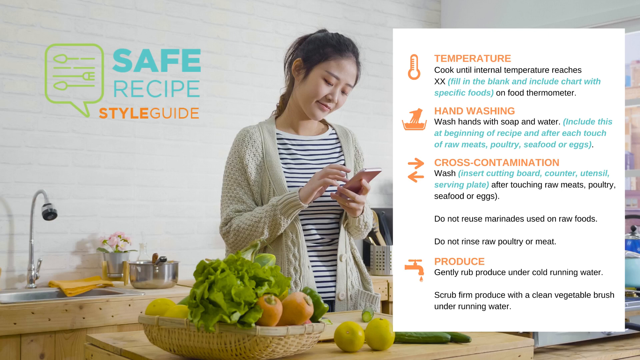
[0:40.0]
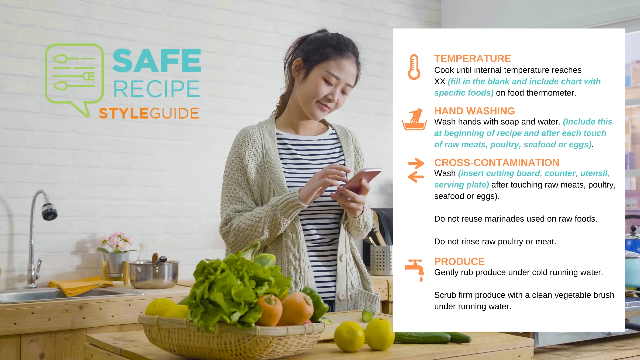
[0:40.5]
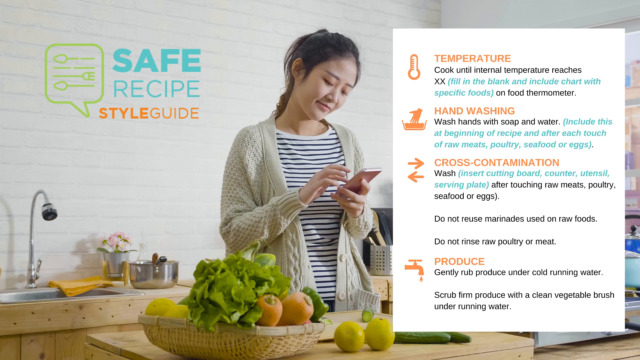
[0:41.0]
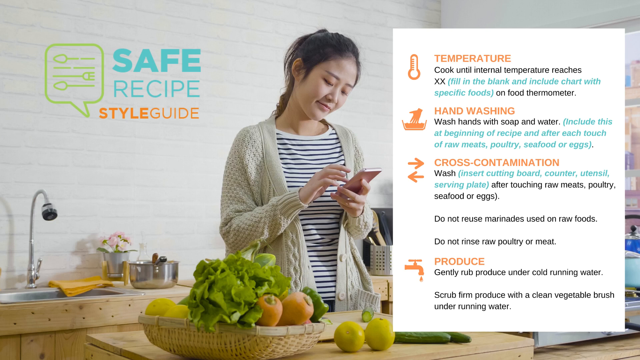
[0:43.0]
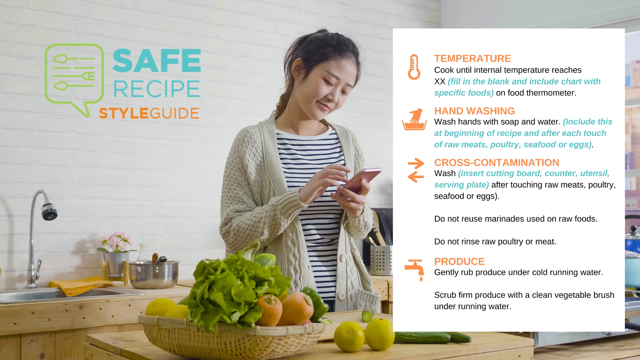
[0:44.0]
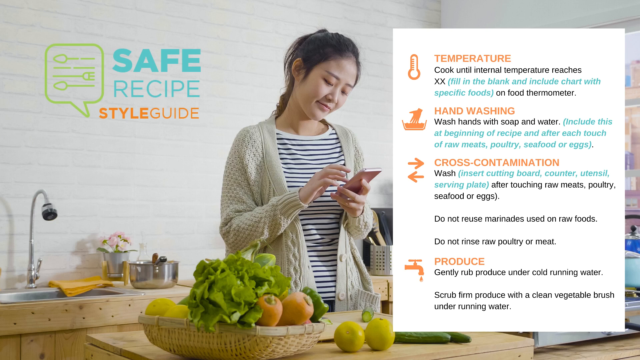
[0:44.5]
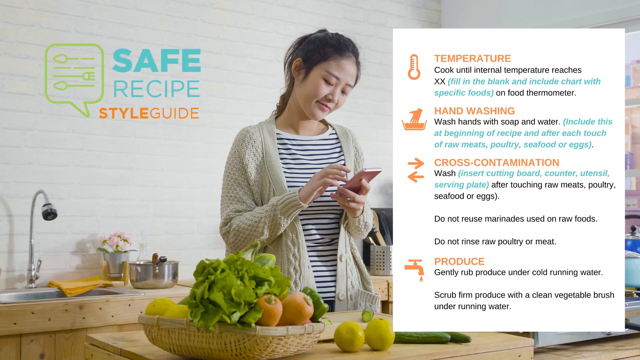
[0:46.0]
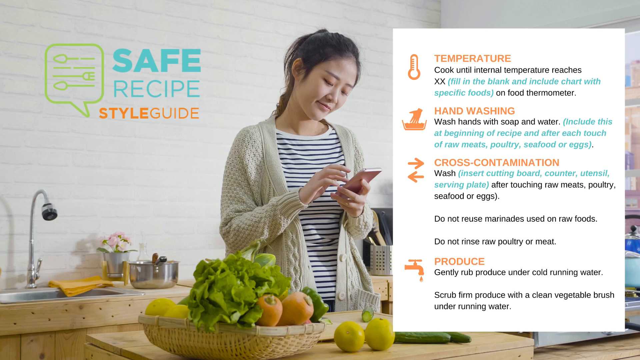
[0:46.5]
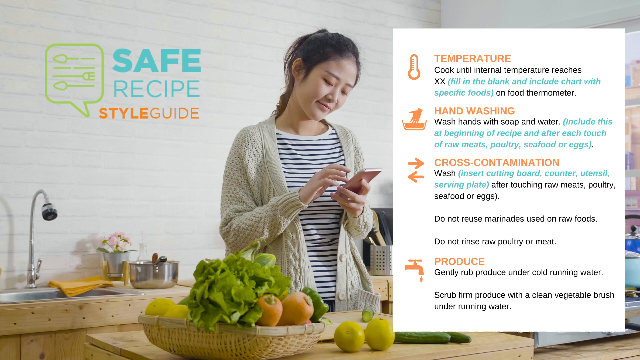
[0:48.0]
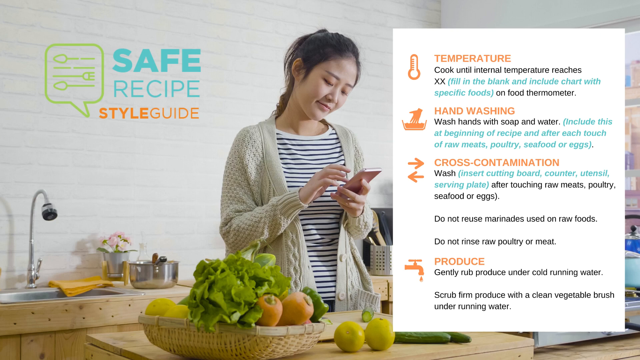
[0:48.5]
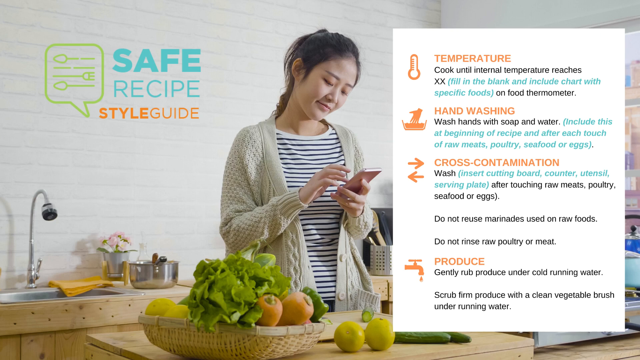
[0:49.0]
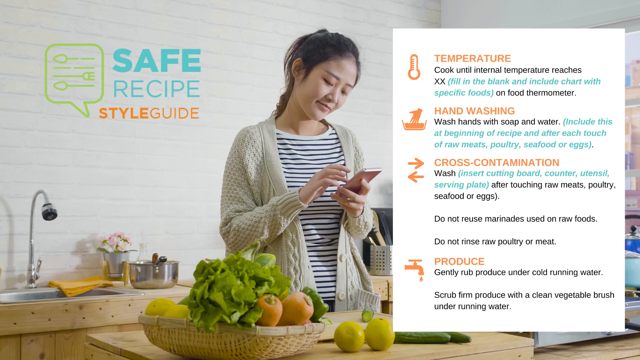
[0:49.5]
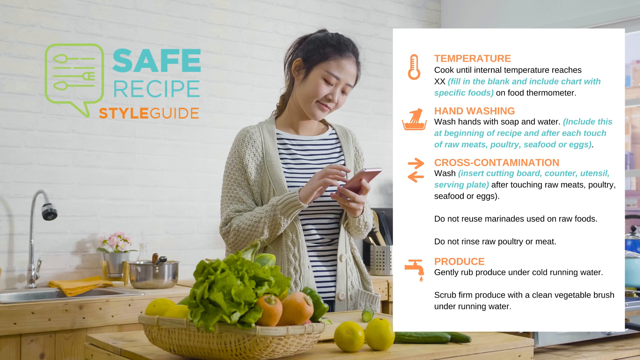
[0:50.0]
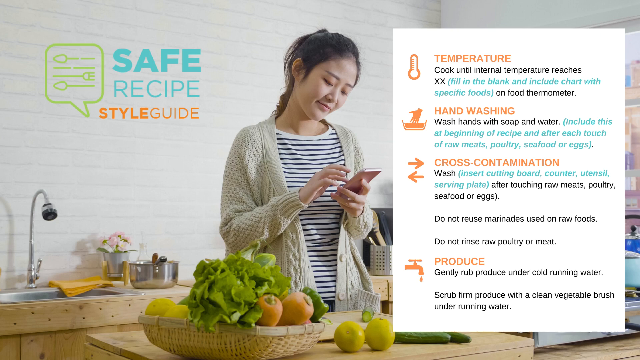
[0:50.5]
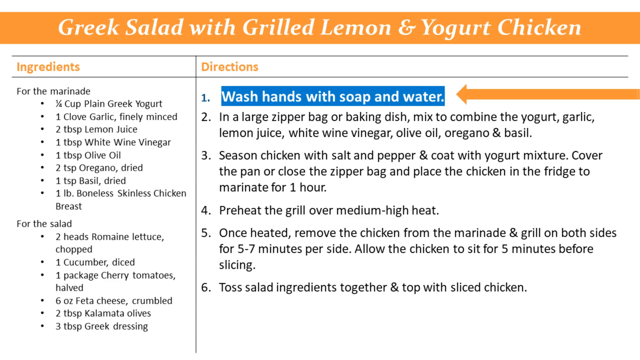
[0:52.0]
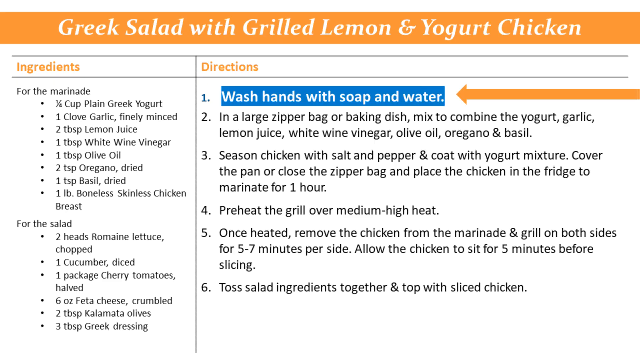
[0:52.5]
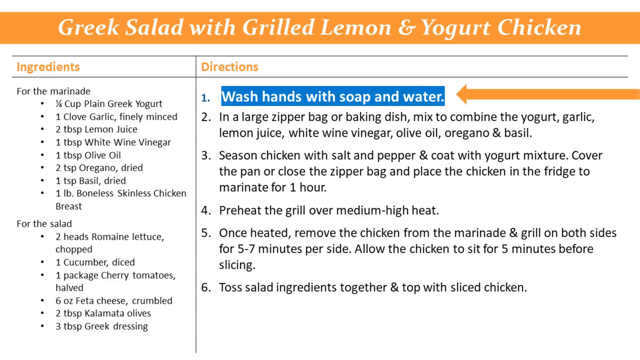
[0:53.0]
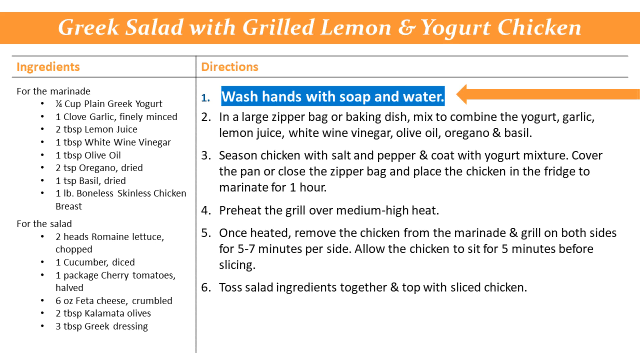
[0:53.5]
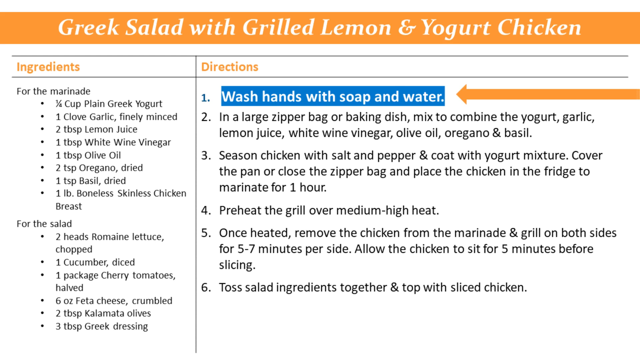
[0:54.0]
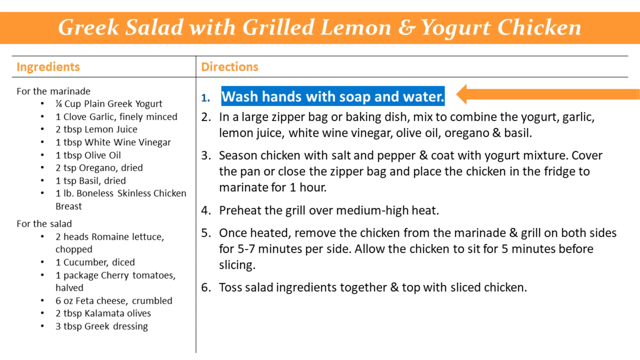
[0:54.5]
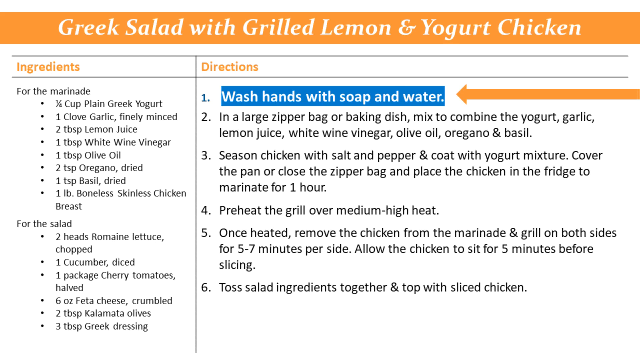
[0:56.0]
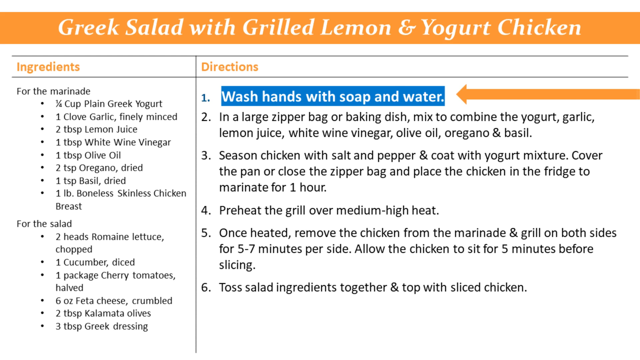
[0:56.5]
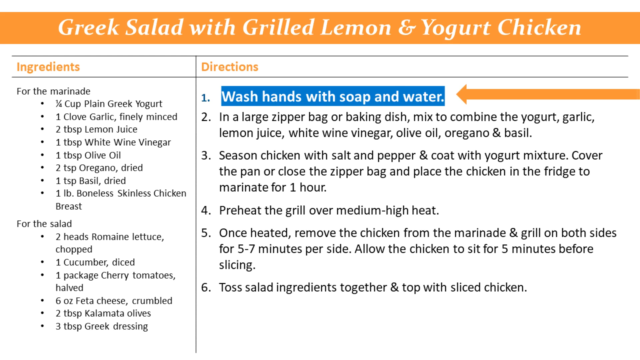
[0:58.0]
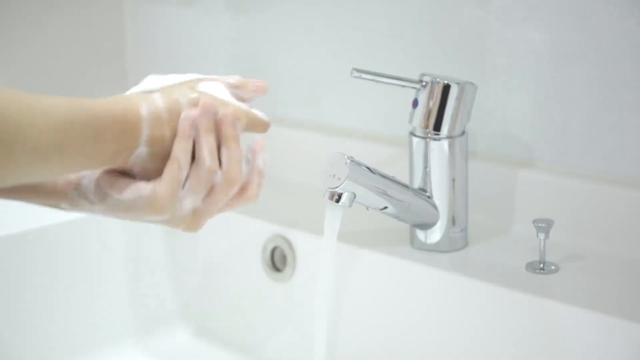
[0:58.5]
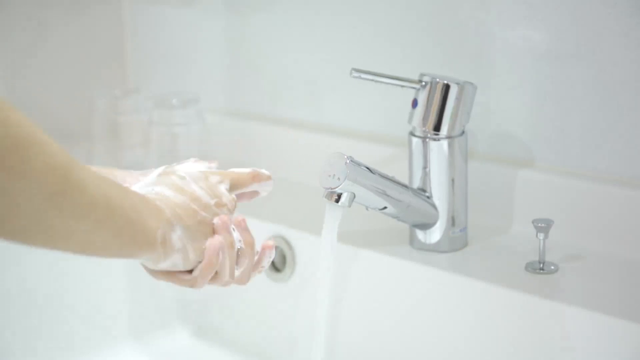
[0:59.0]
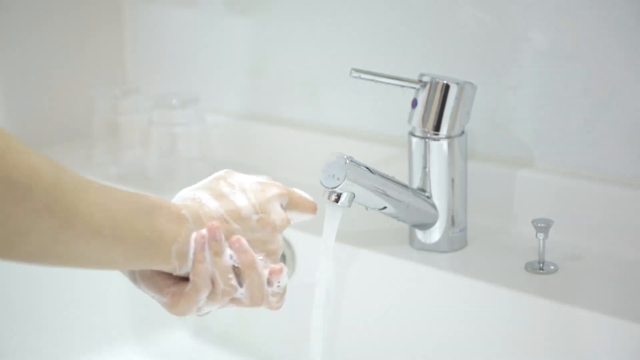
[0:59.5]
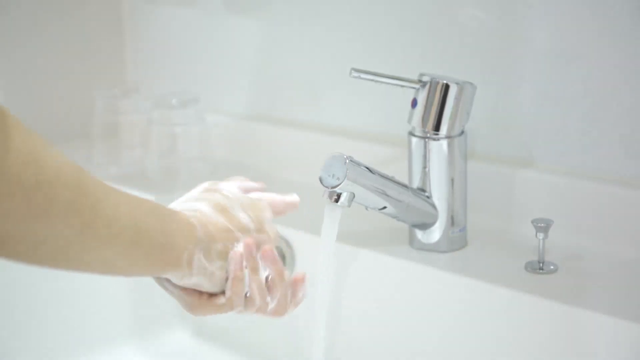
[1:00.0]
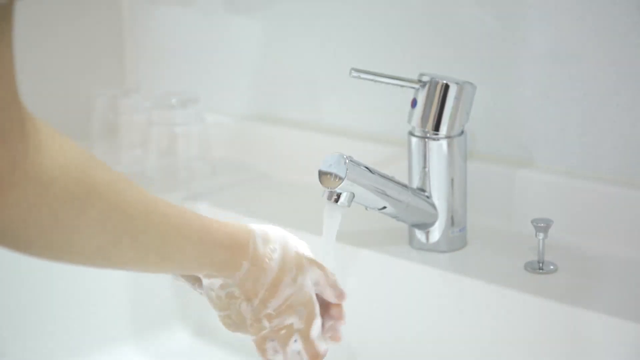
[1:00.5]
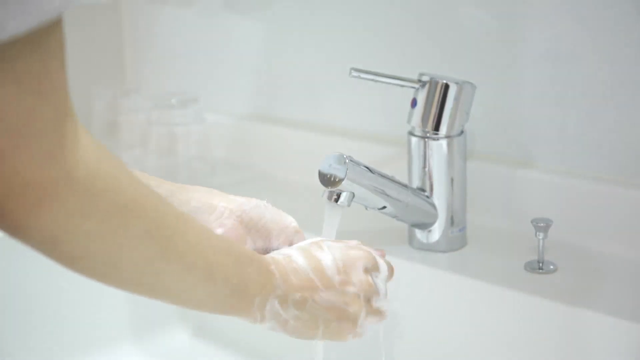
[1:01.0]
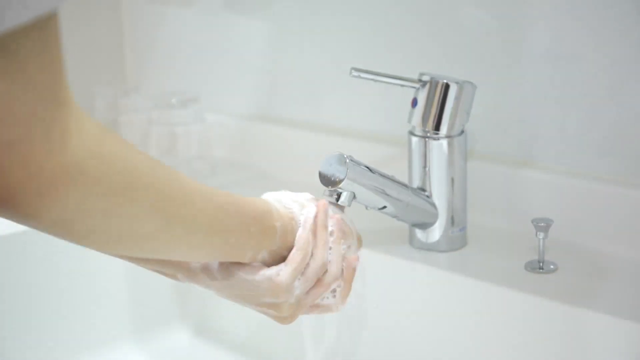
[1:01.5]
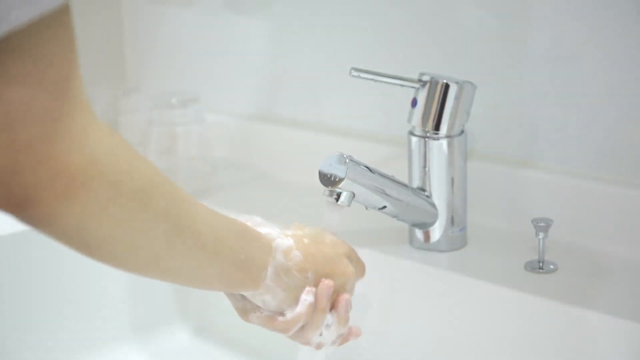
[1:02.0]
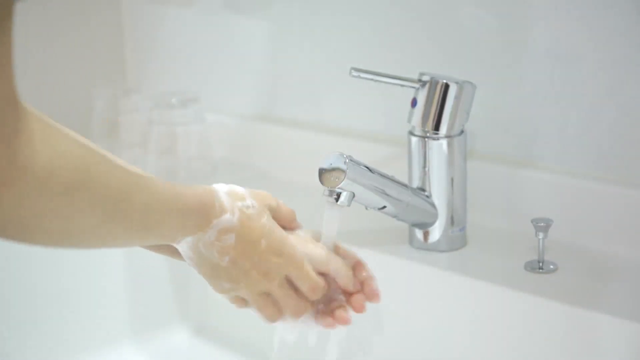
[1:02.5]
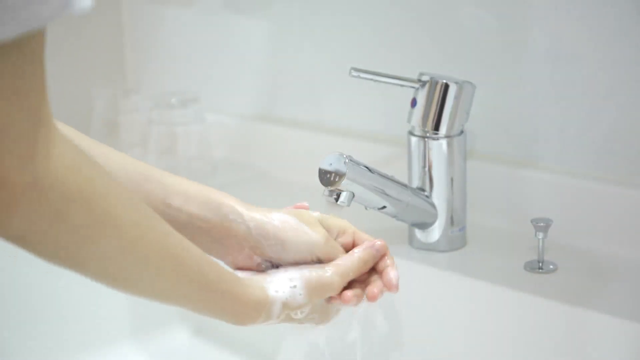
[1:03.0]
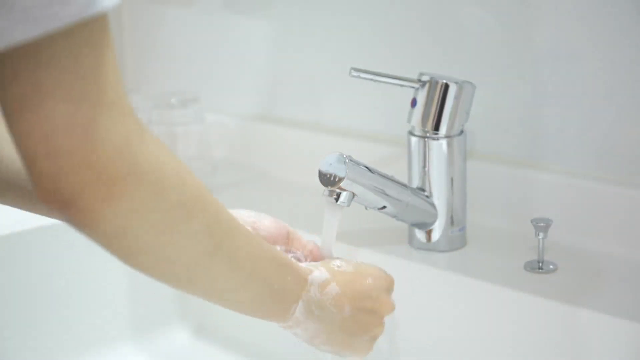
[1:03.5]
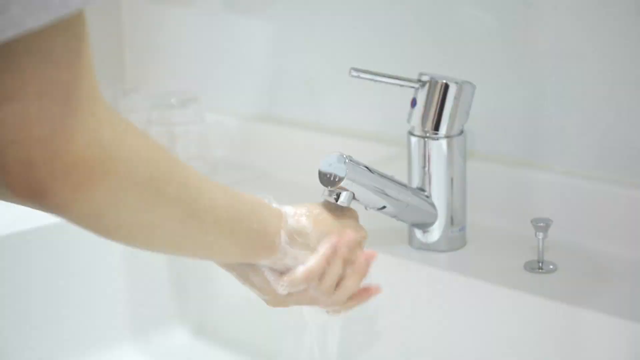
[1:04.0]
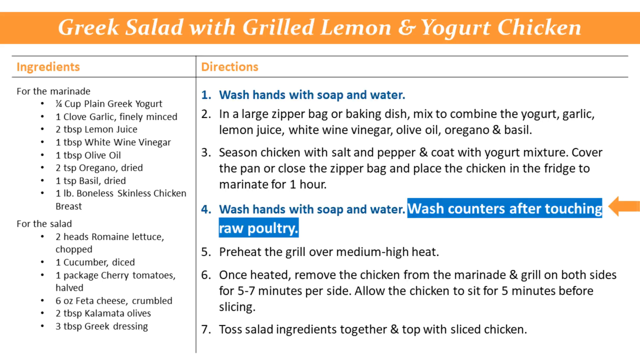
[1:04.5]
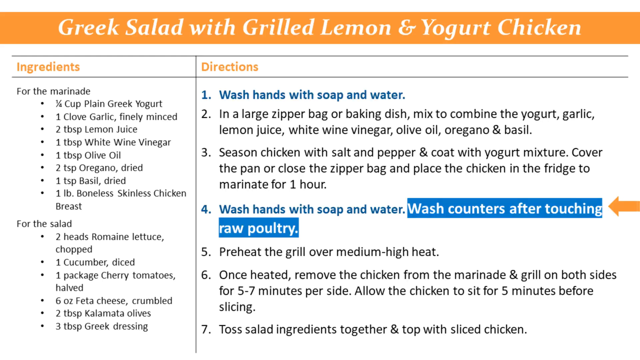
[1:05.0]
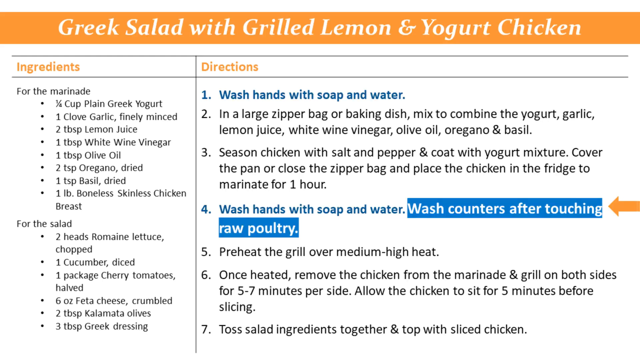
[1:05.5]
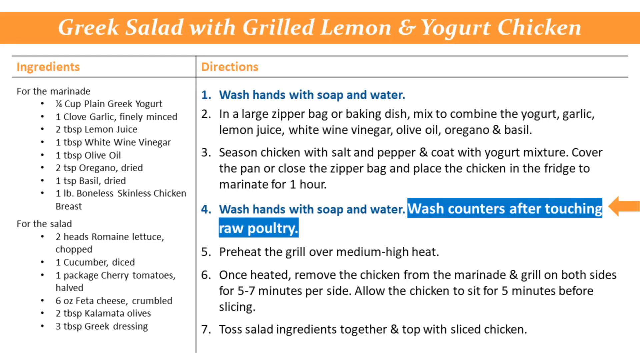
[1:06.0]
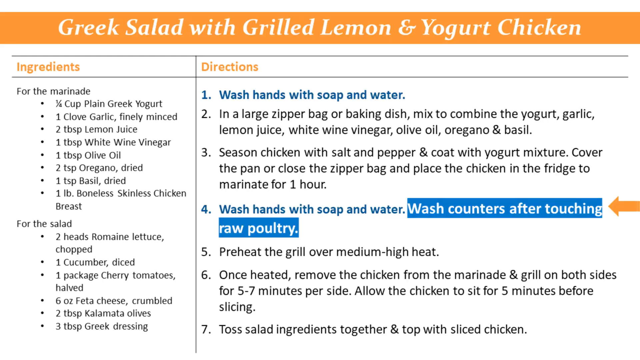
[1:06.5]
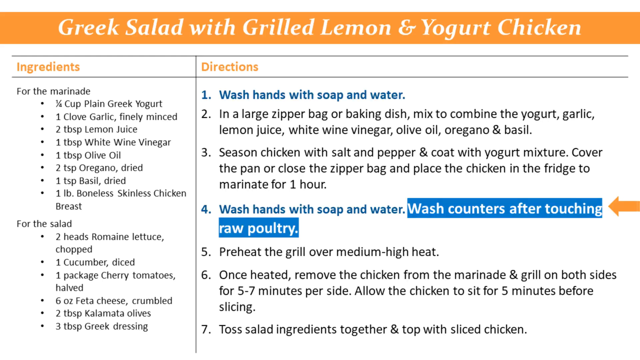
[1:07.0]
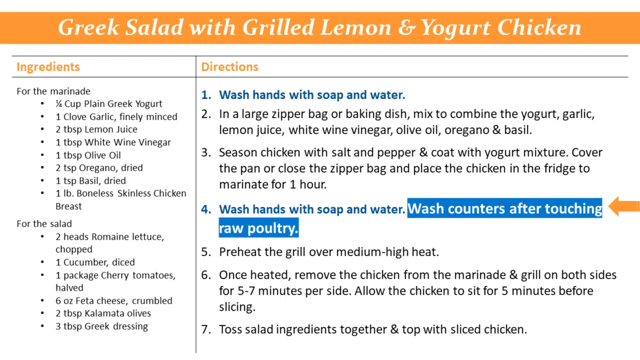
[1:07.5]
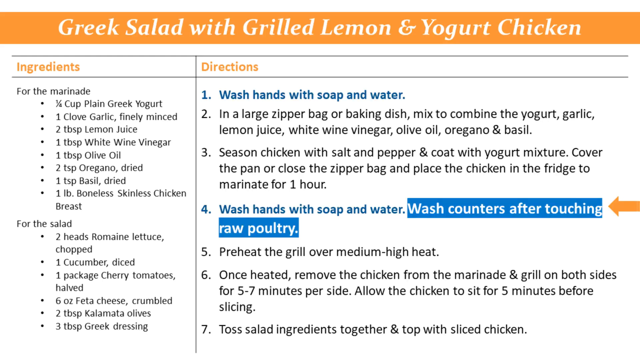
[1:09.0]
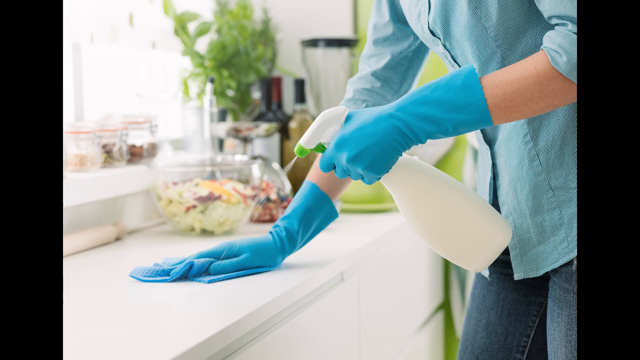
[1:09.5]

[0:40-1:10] A lady washes her hands before starting to cook.